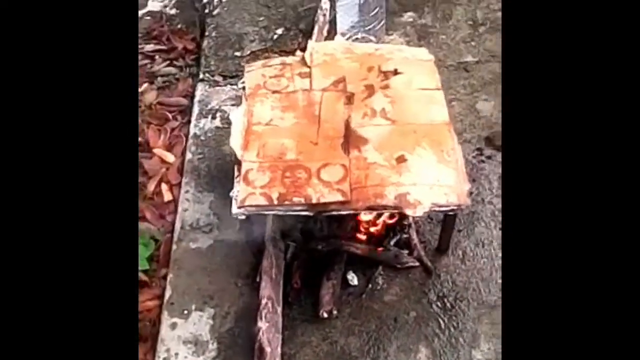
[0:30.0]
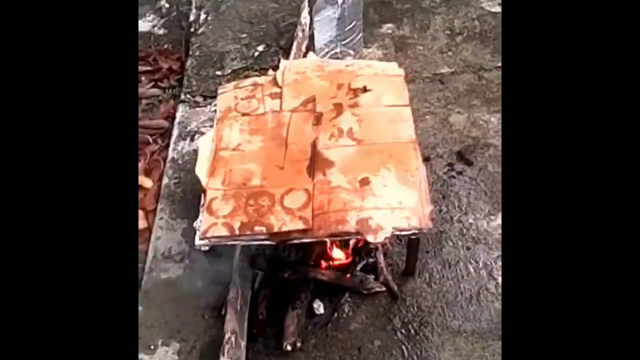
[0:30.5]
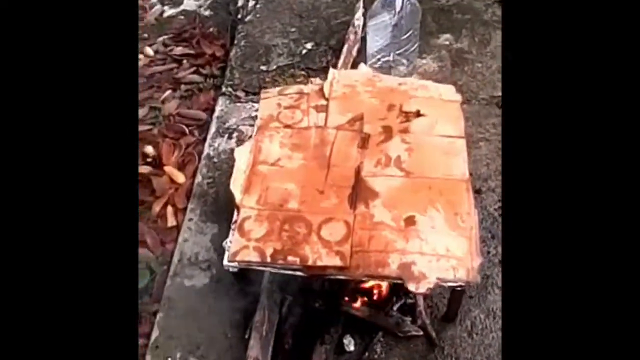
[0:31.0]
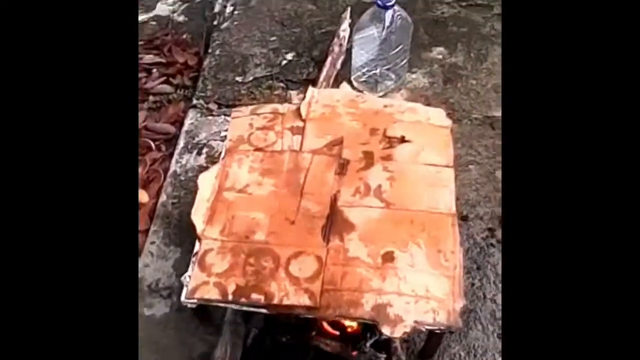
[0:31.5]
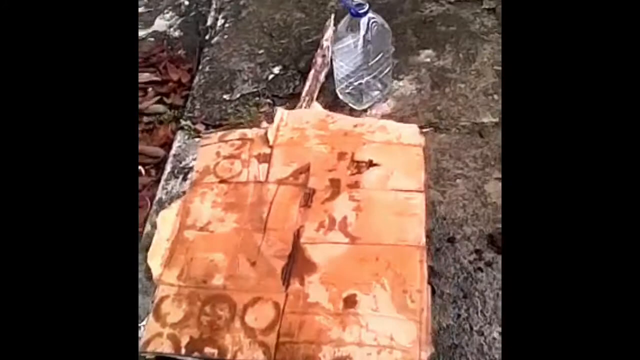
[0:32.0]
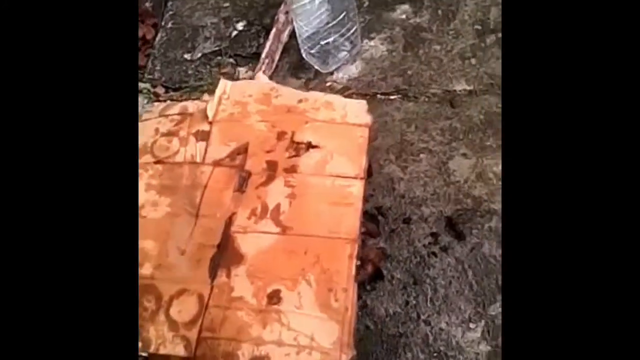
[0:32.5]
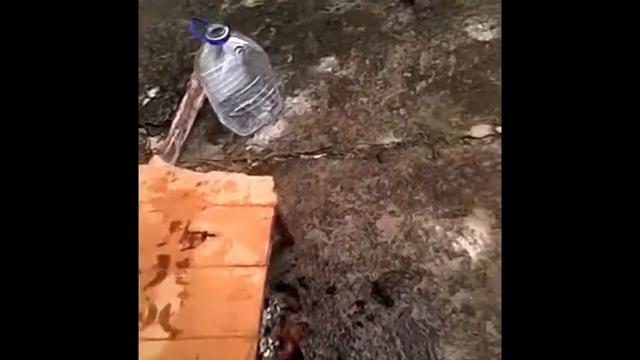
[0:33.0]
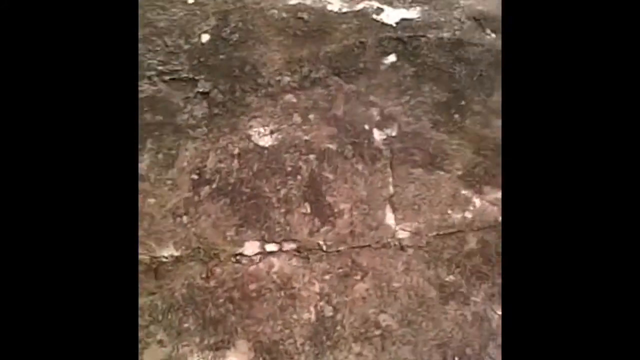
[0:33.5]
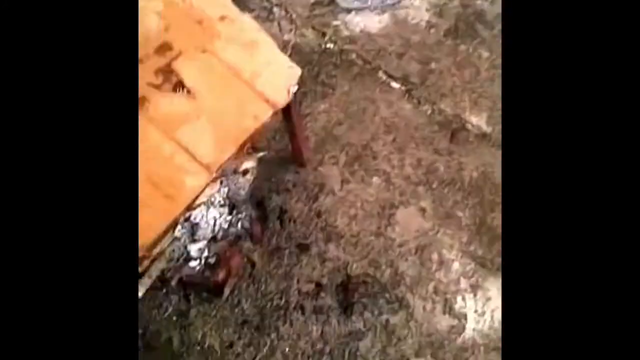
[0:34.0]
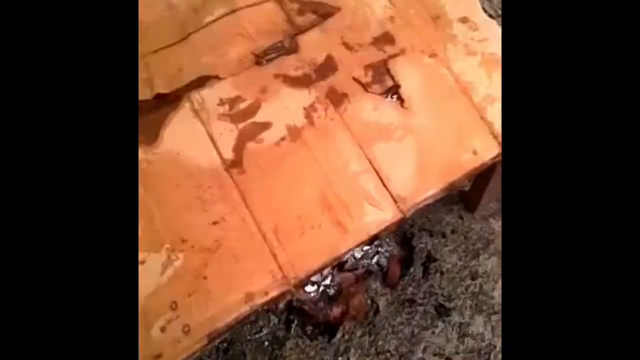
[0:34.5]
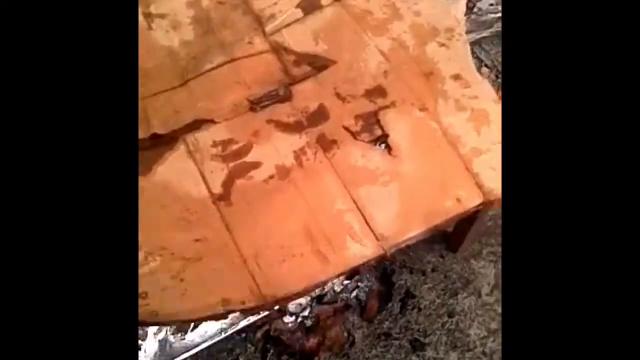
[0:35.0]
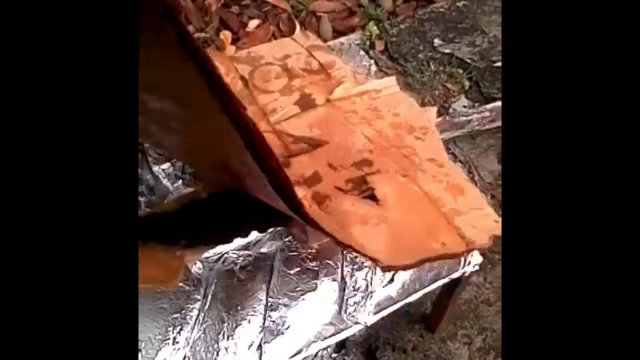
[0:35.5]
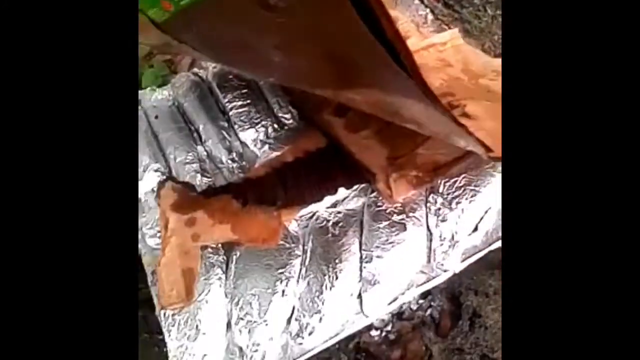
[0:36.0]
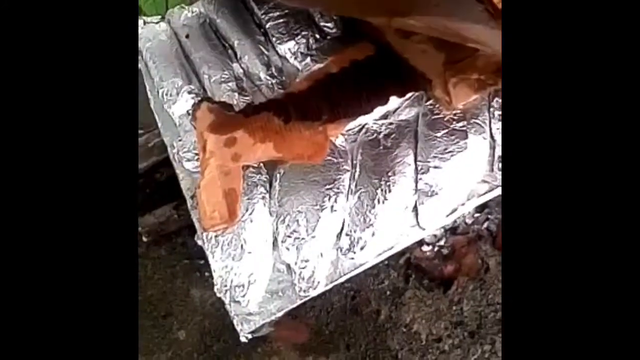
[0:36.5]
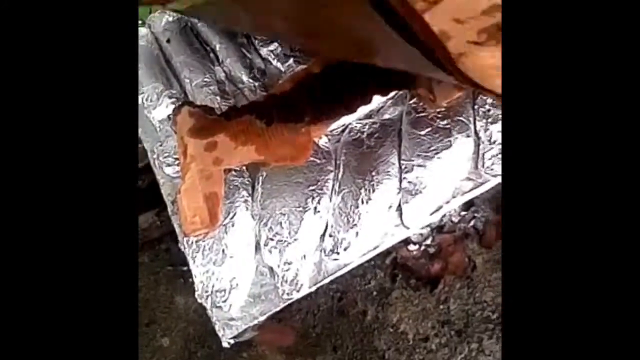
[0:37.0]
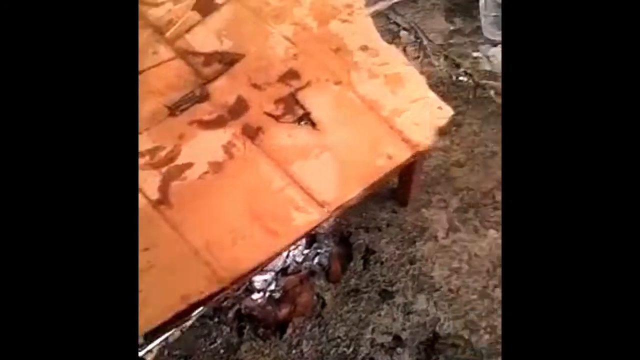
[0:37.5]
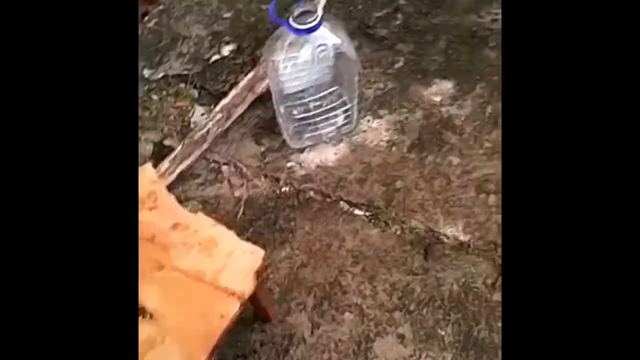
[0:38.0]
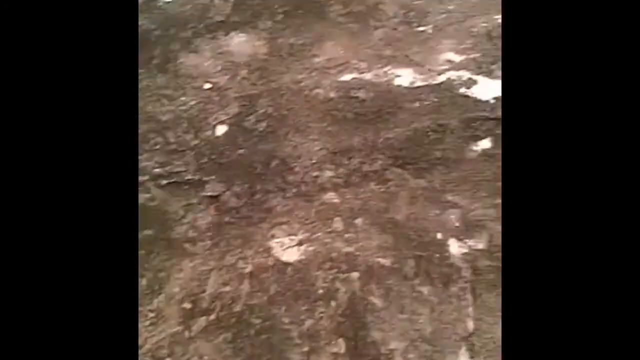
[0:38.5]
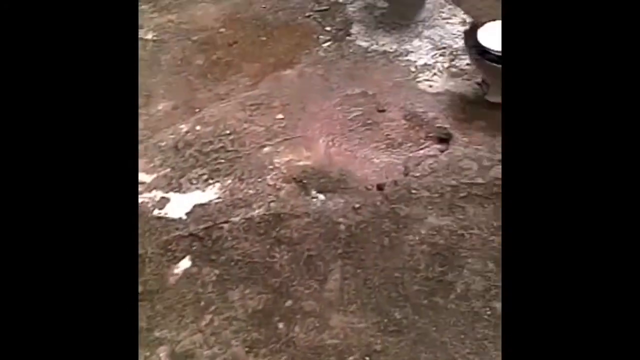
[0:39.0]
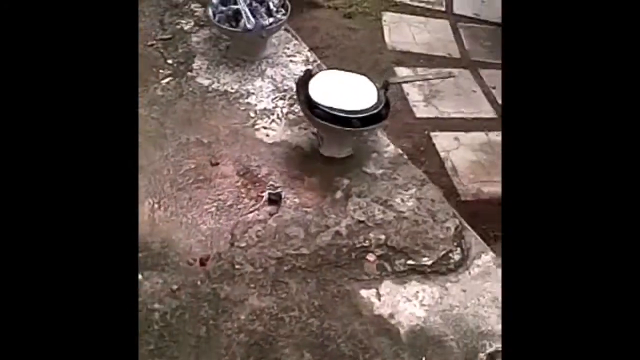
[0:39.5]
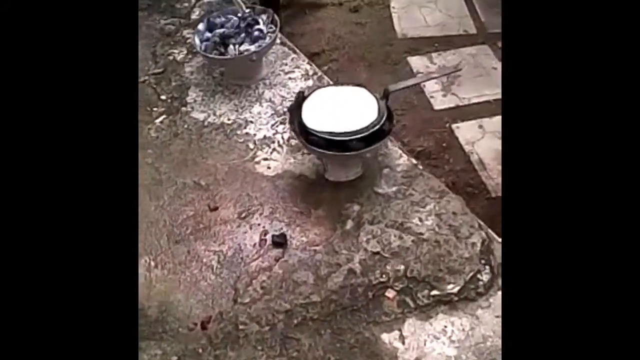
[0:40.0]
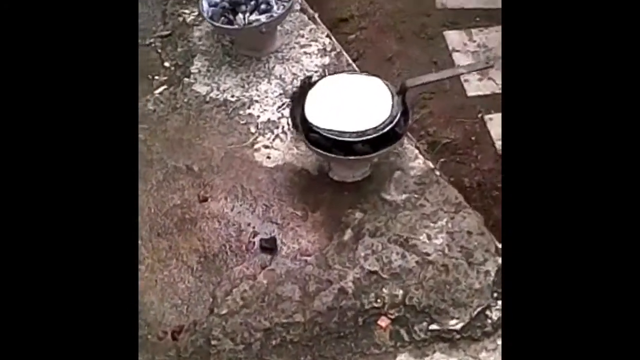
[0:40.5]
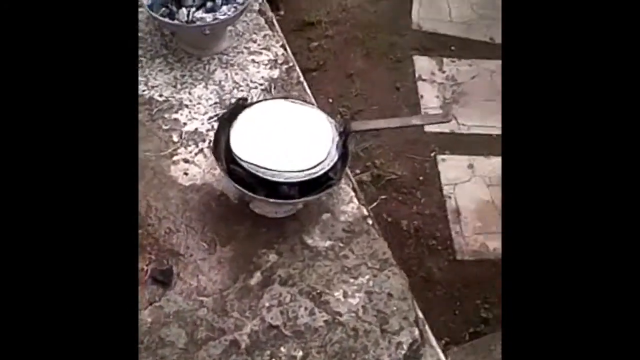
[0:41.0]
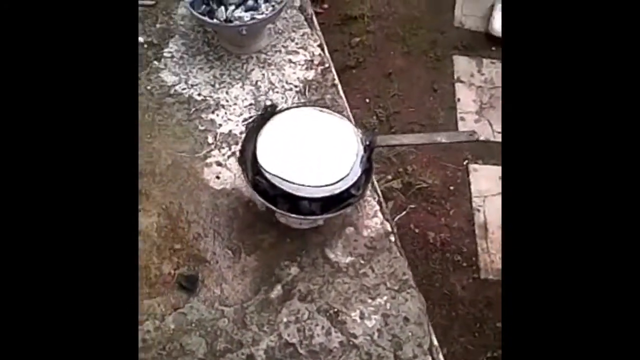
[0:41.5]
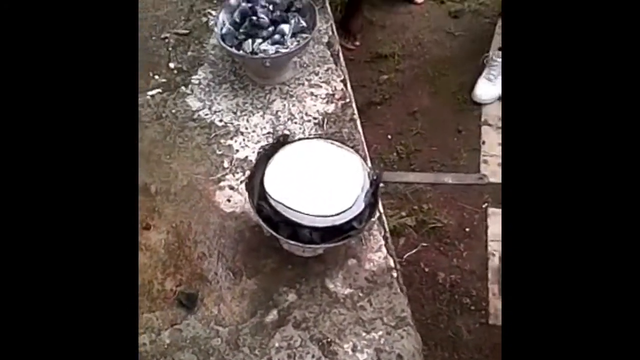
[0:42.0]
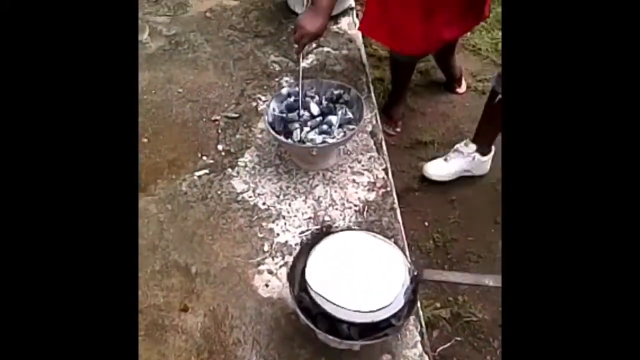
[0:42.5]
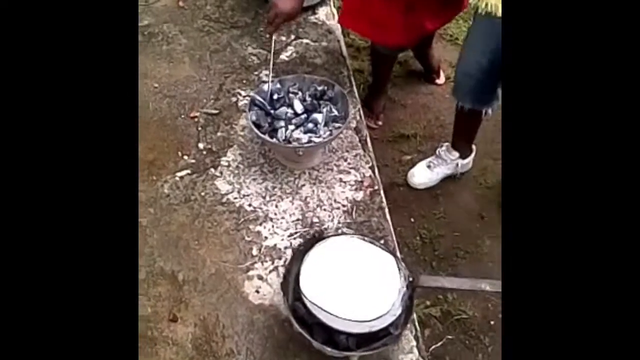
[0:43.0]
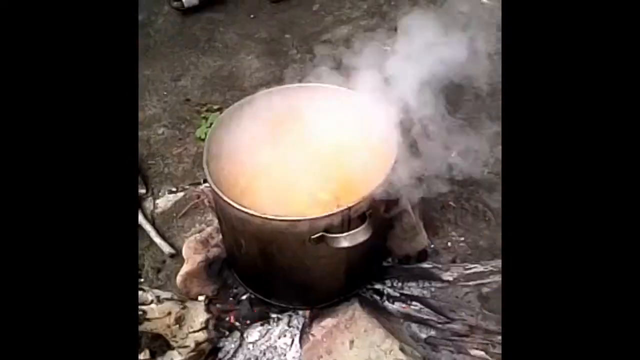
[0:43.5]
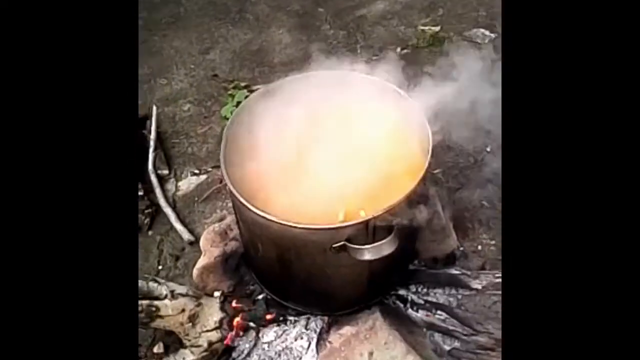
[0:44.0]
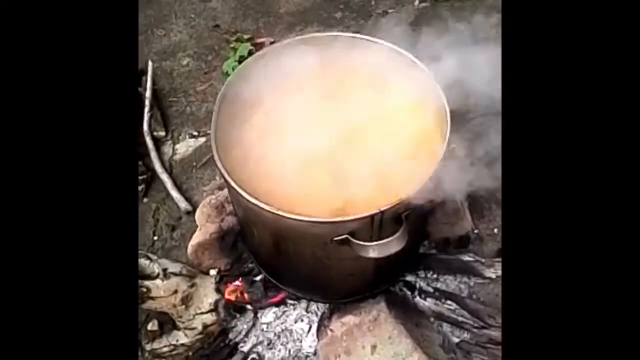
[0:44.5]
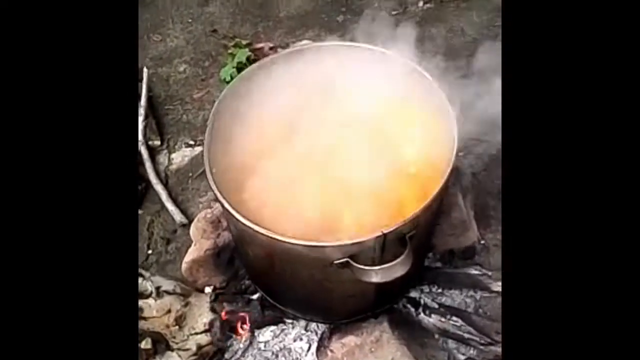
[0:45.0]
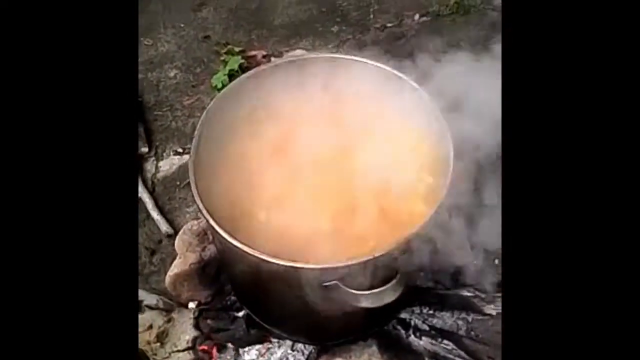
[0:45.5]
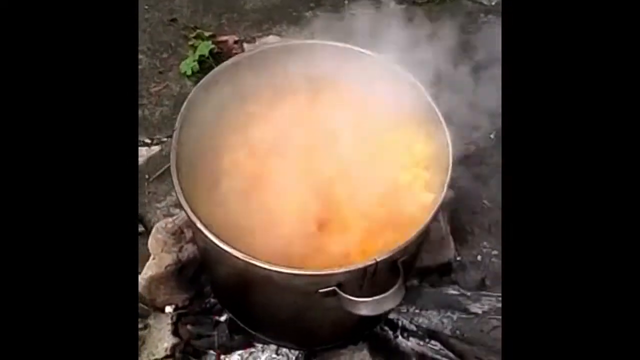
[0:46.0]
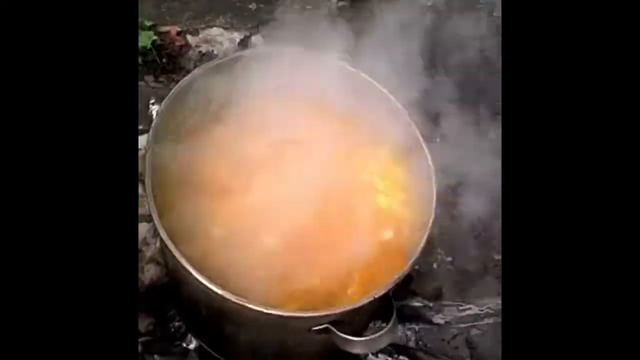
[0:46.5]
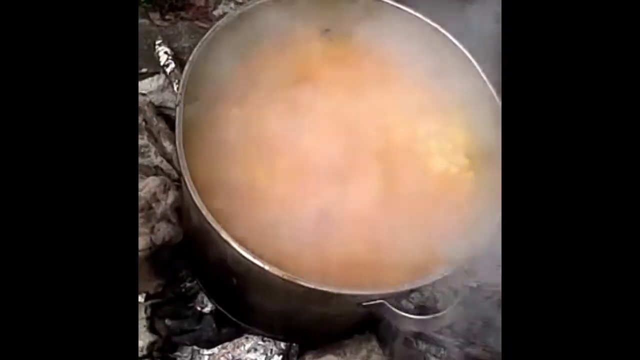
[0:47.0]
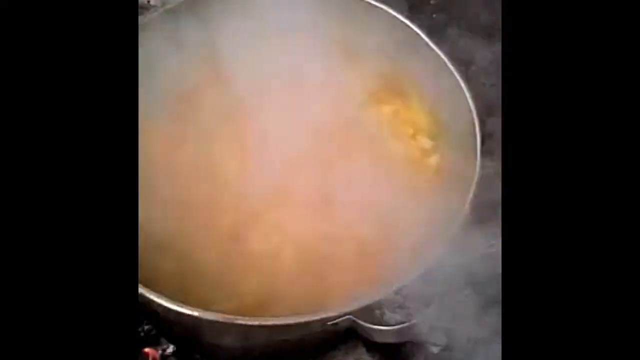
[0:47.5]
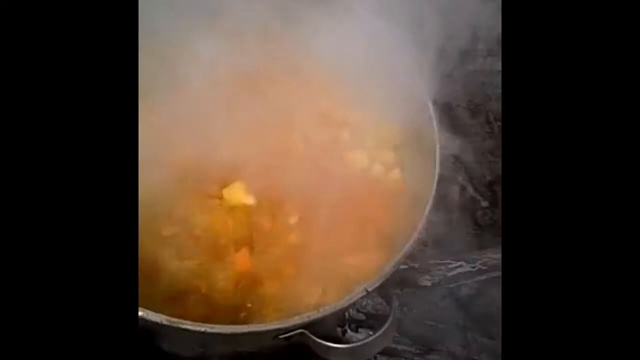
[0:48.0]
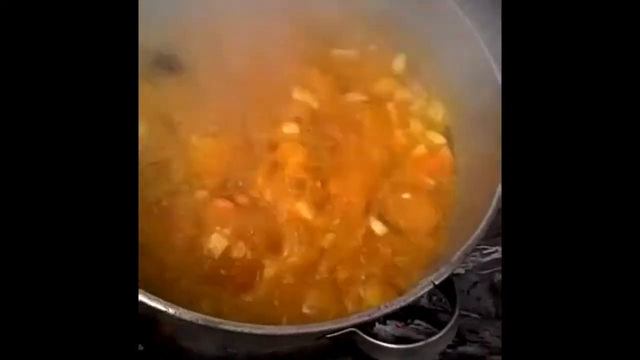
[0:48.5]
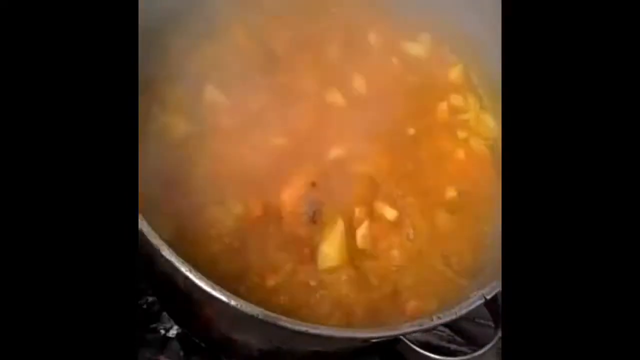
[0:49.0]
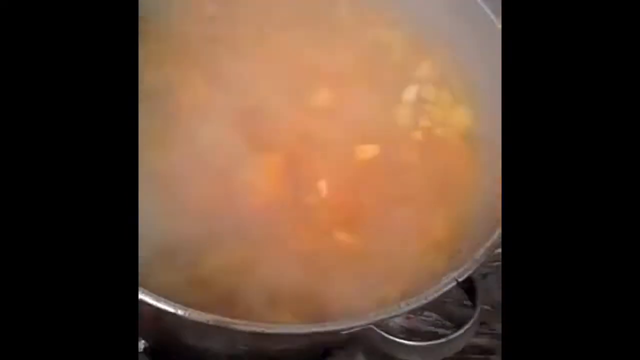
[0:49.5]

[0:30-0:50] An aerial shot looks down at the cardboard-looking thing. The camera rotates for a moment, looking to the right and then the left, and then fills the bottom left with some kind of mat; it is unclear whether it is cardboard, but it looks like it is made of pieces of cardboard on top. There is a green label with a barcode on it, so it looks store-bought. A lot of tinfoil is visible around the outer part underneath the mat, and a square opening lets the heat source get through. The mat is put back. The camera then walks over to something with a flat handle extended out to the right. A lady in a red dress comes over and handles a bucket, which appears to be a bucket on pedestals like the other one. This one with a handle seems to have charcoal underneath it and a lid on it, though it is hard to tell. Later, smoke or steam comes off the pot; the lid is off, and something almost like gumbo bubbles in the middle. At the bottom part a curved stainless steel handle comes out.